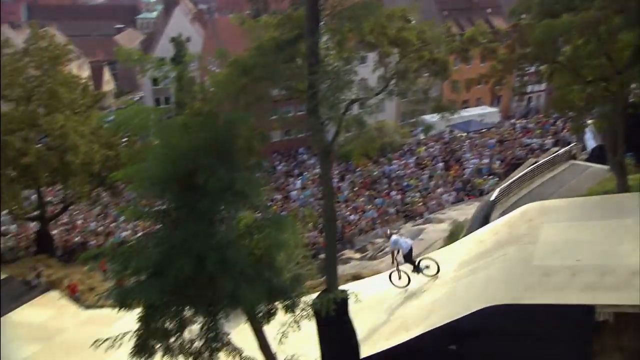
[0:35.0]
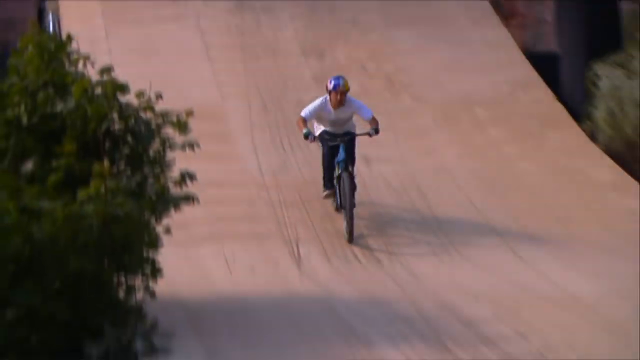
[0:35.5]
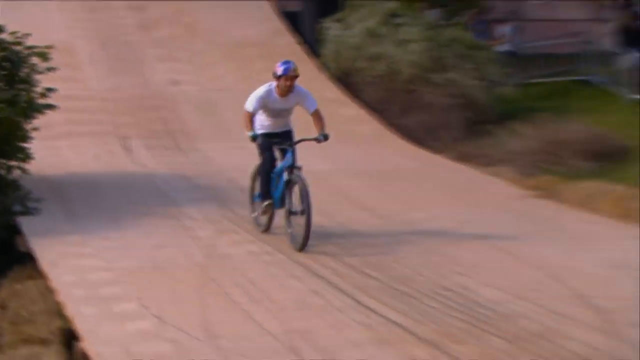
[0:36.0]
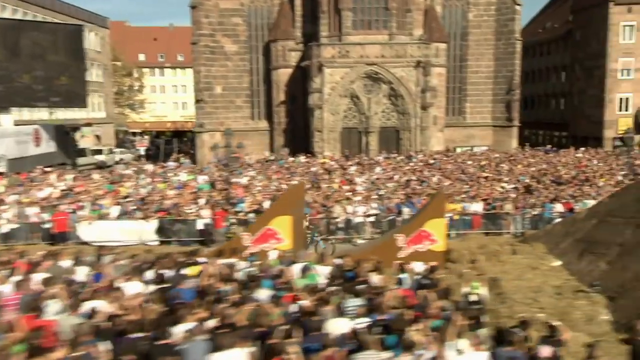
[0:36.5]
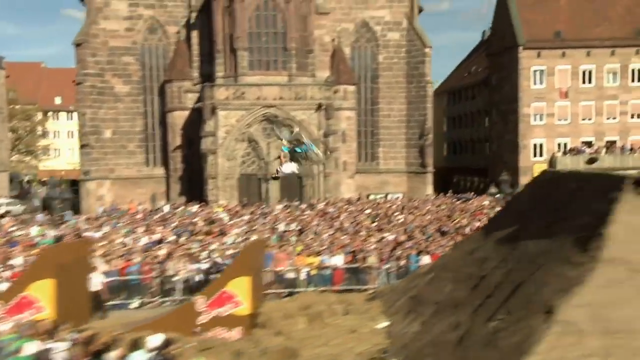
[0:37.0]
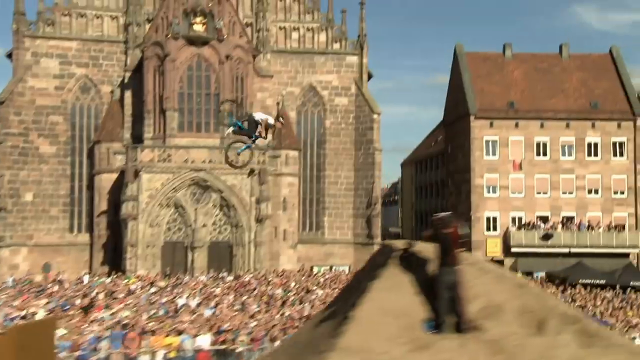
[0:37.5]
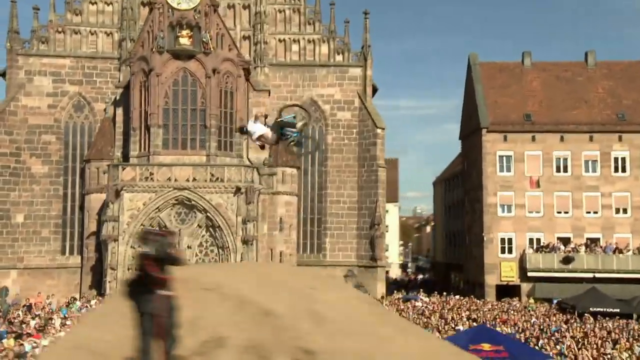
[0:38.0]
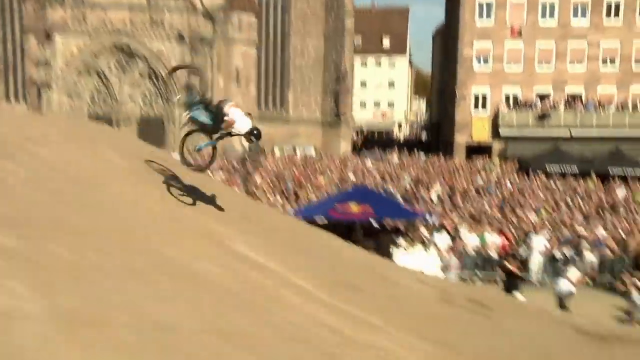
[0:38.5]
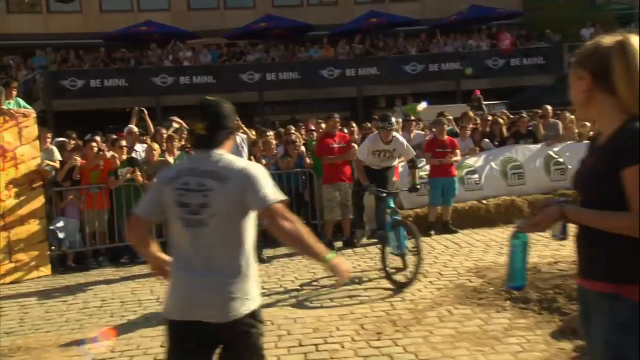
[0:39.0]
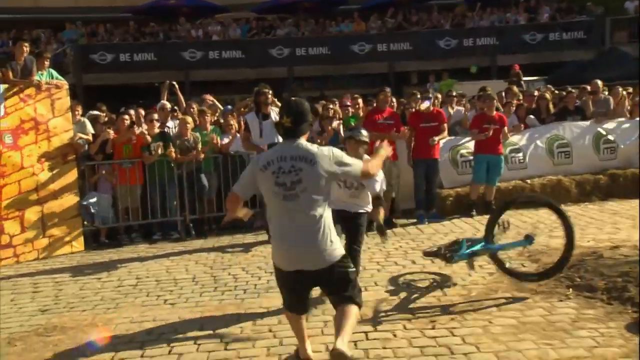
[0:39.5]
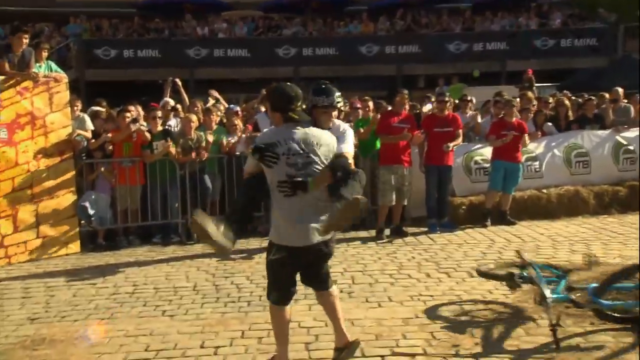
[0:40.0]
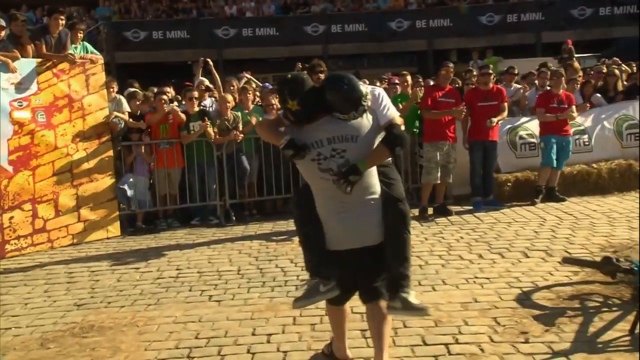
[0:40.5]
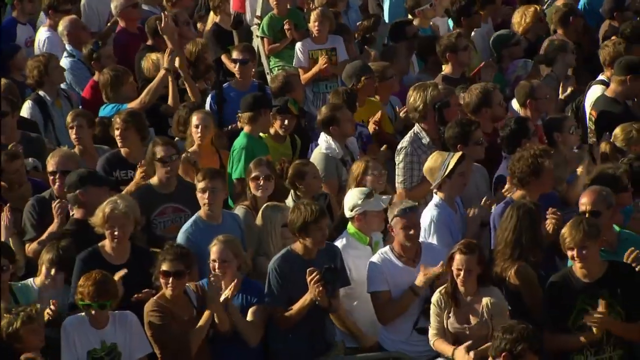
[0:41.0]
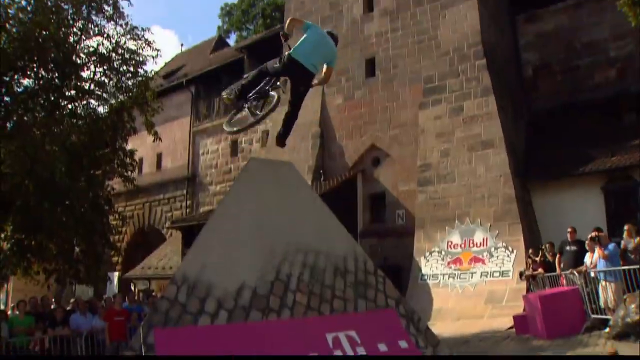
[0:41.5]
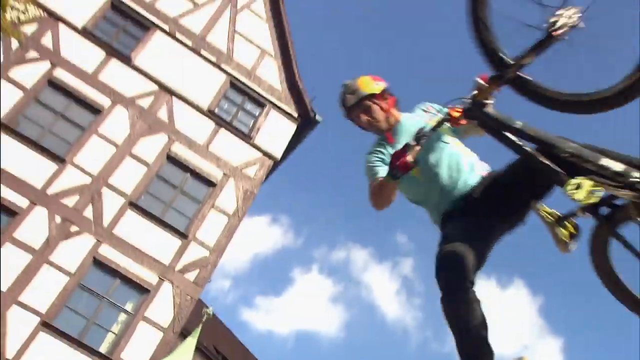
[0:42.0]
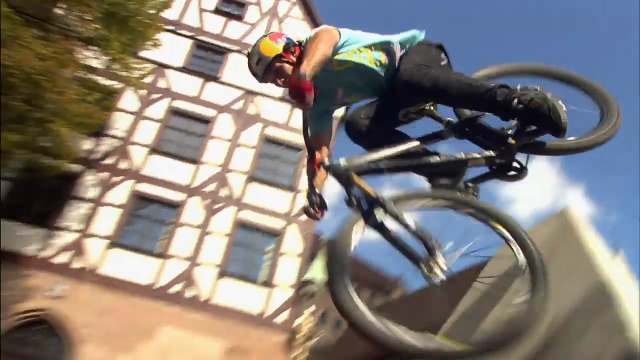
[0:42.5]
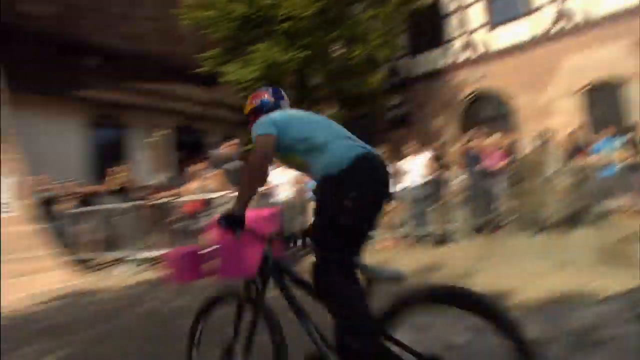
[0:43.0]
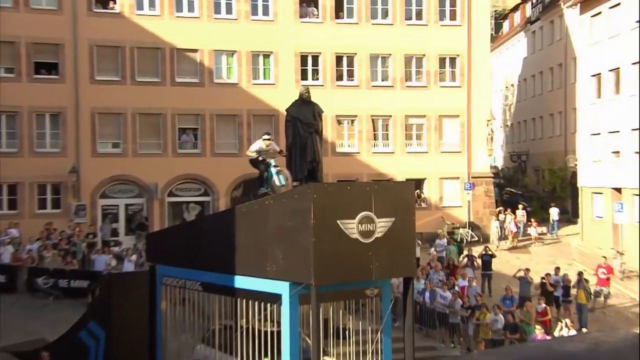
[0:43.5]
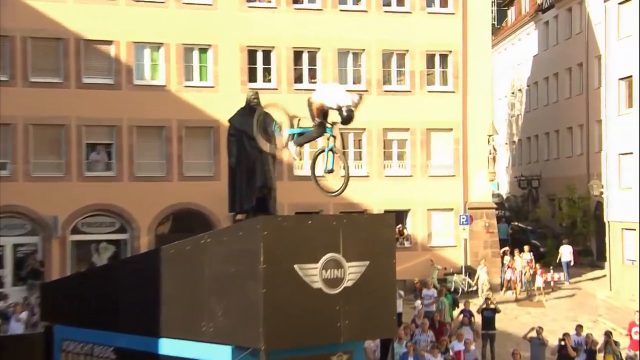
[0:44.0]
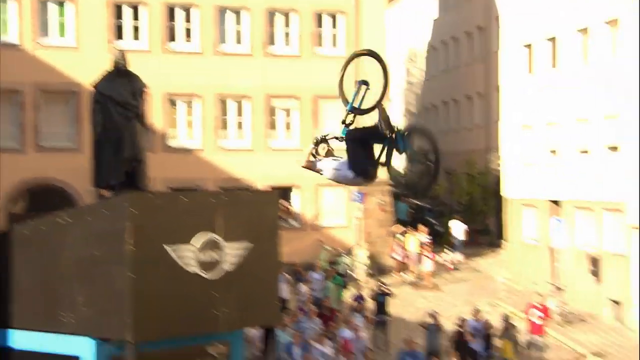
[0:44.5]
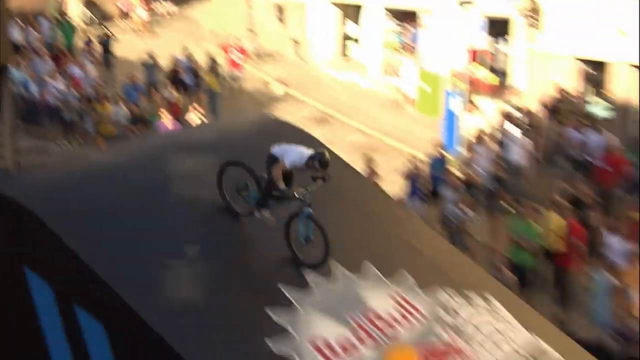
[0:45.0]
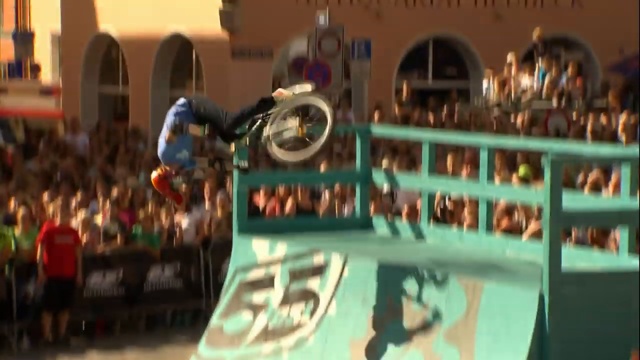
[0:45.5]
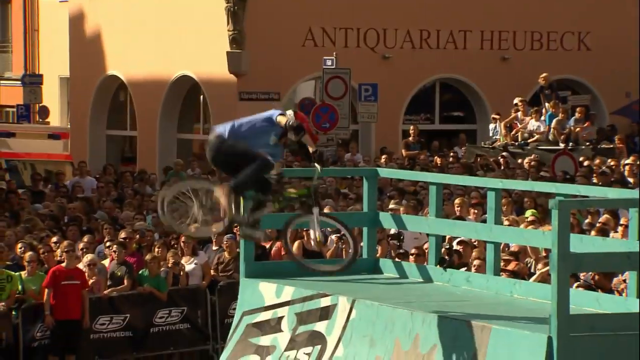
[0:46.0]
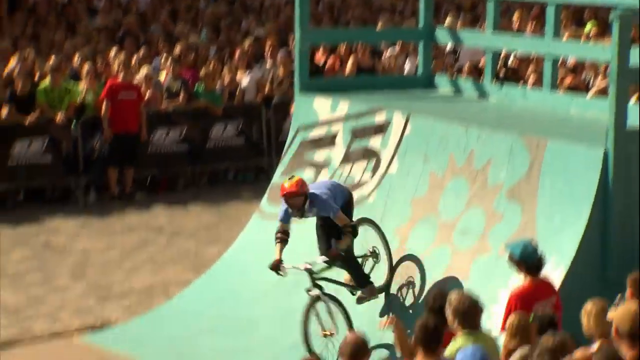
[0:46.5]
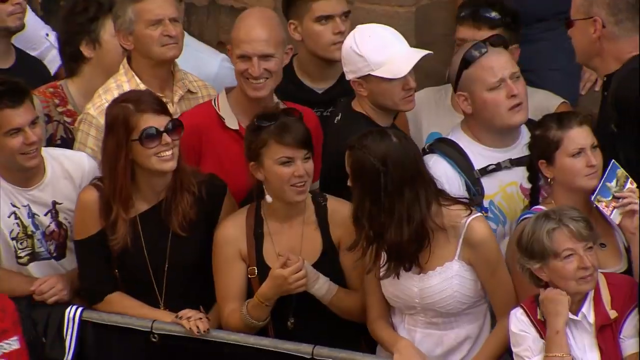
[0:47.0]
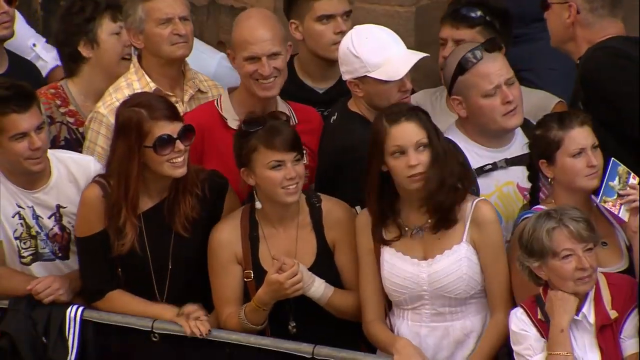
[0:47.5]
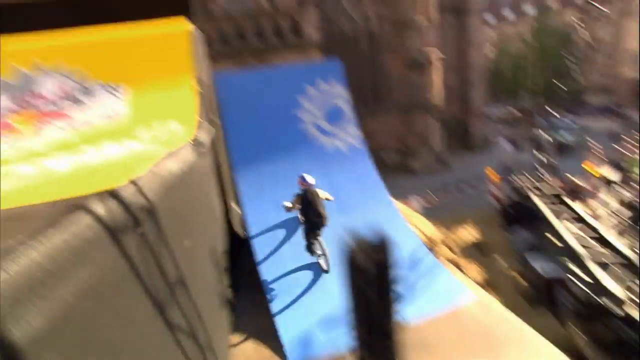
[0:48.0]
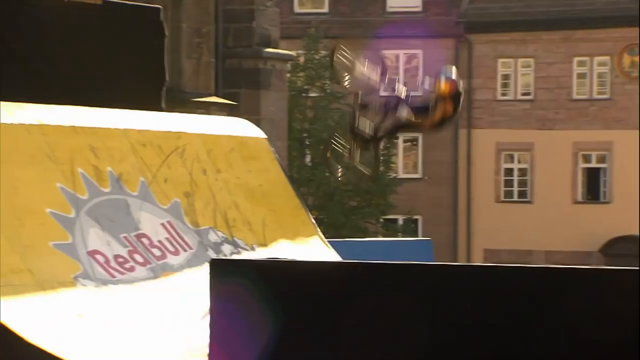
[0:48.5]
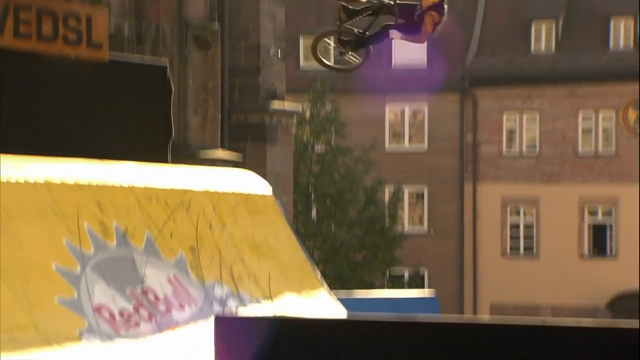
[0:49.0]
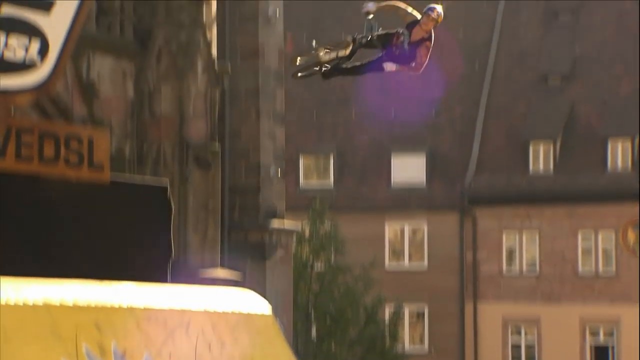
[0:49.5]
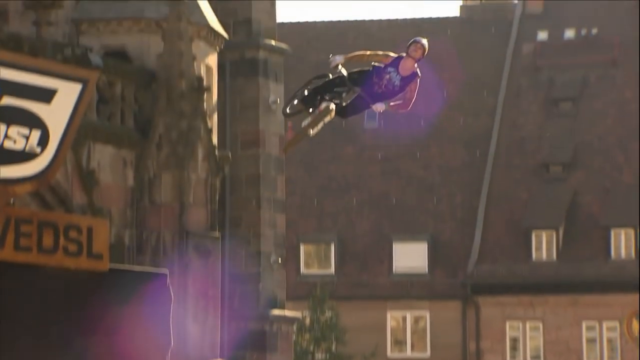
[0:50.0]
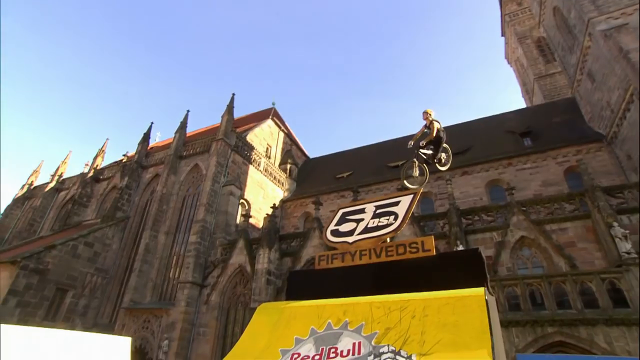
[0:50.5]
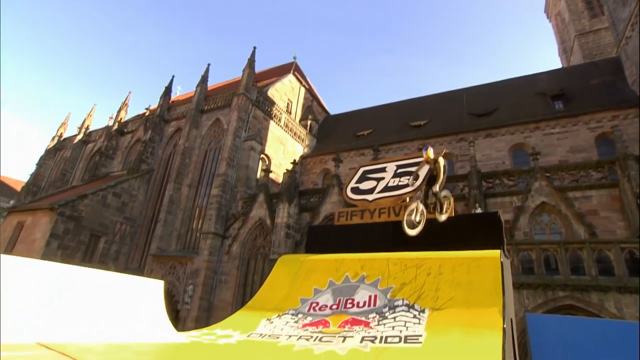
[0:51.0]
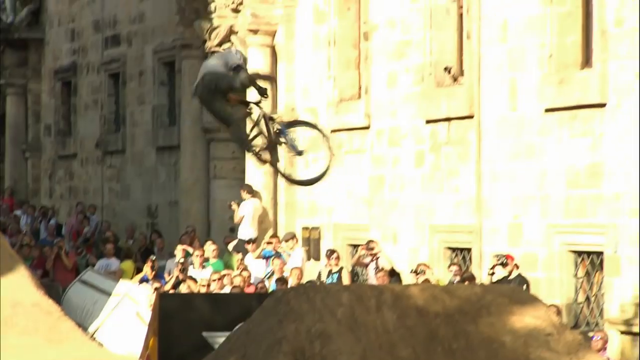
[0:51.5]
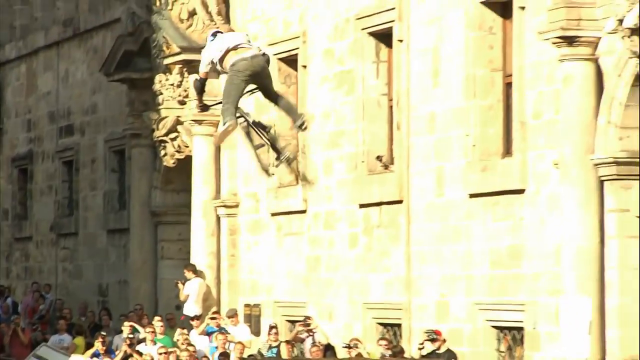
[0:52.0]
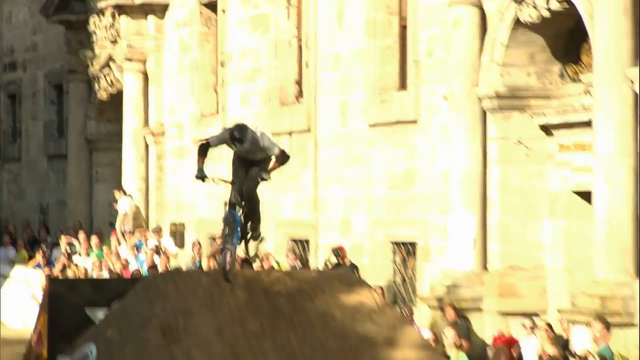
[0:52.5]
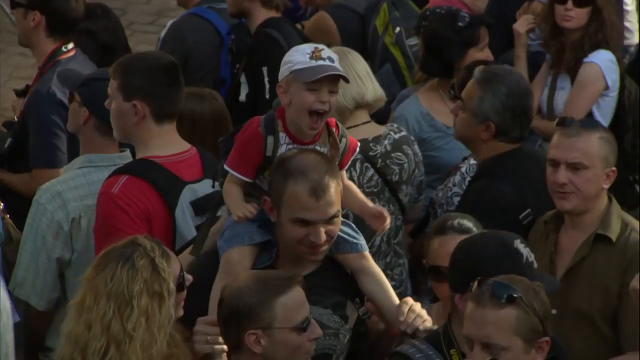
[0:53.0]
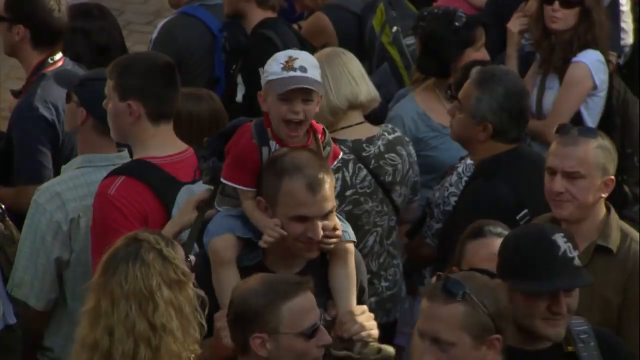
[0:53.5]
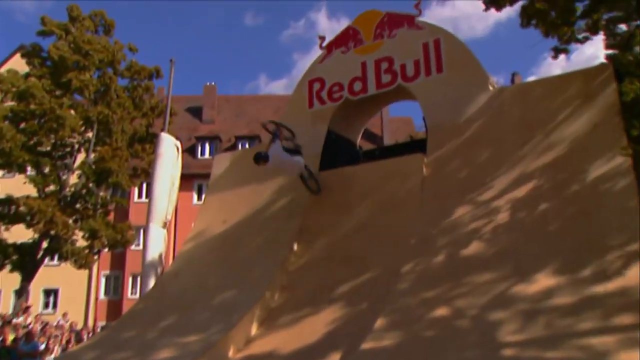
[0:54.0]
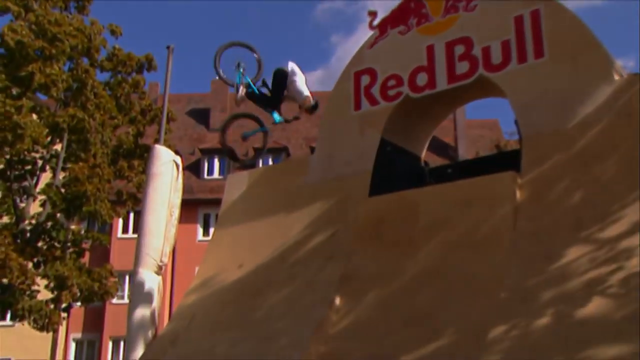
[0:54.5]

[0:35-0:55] At an extreme bicycling event, men do flips in the air off ramps, some high and some low, with some flipping several times before landing at the next ramp. Many spectators clap and are in awe, and some children sit on their parents' shoulders to see better. Ornate brick buildings are in the background. Each bicyclist wears a helmet, but little other protective gear: a few wrist guards and maybe elbow protection on some. They mostly wear jeans and t-shirts as they do extreme flips and spins without getting hurt.